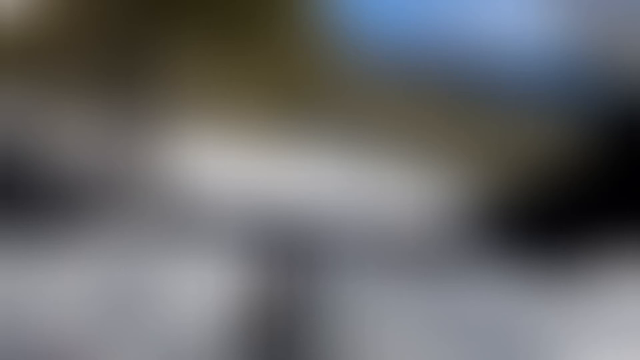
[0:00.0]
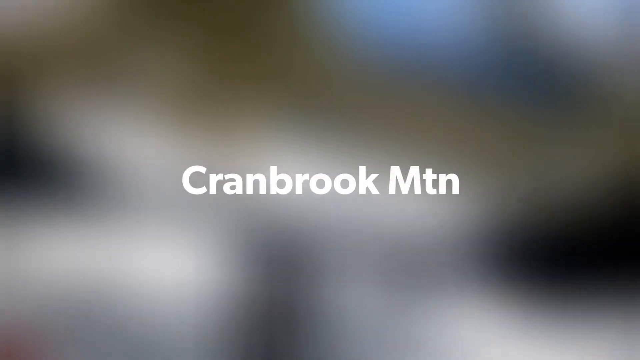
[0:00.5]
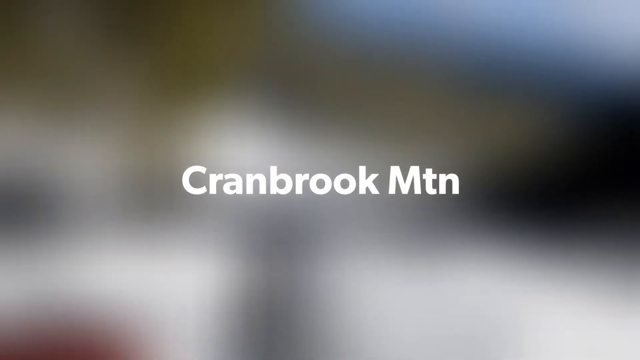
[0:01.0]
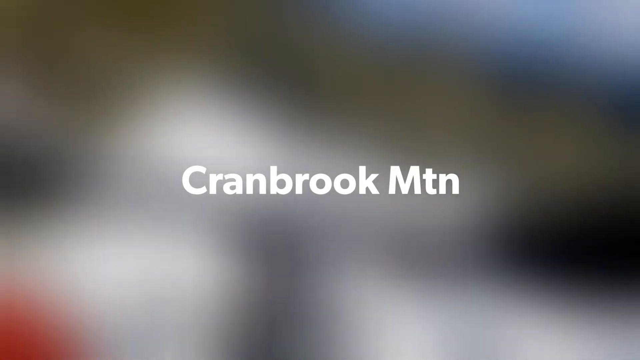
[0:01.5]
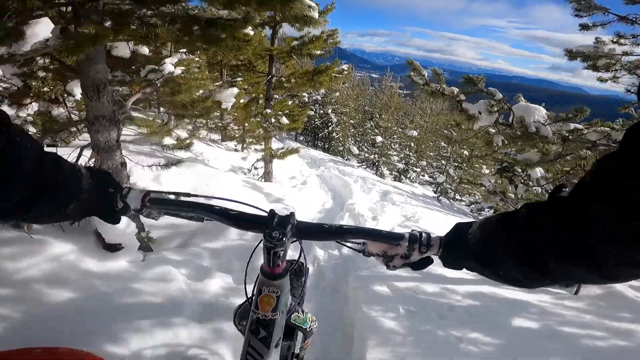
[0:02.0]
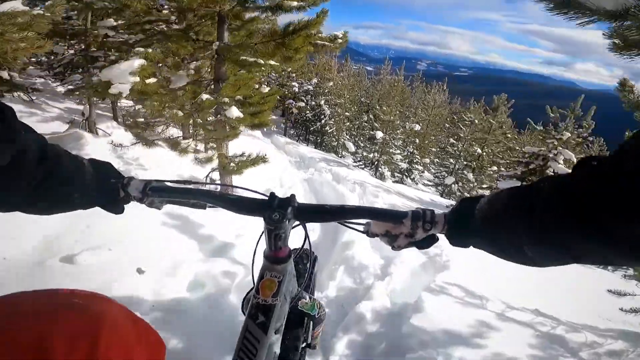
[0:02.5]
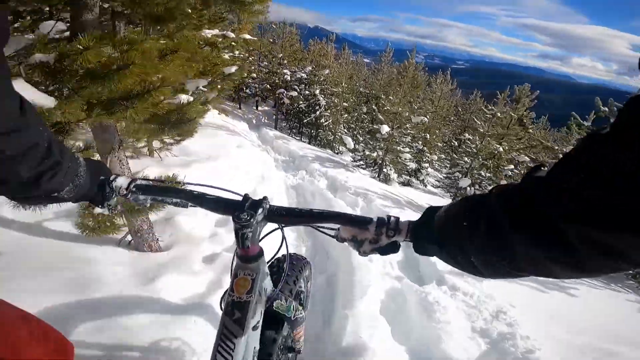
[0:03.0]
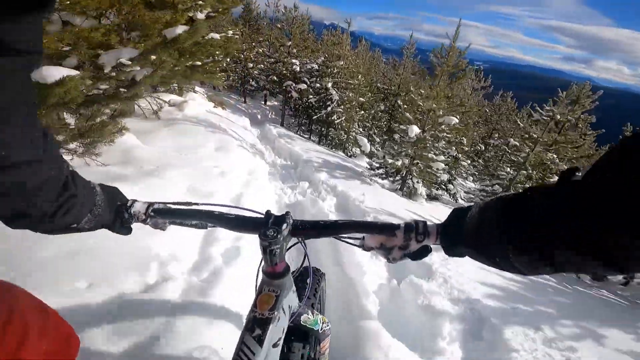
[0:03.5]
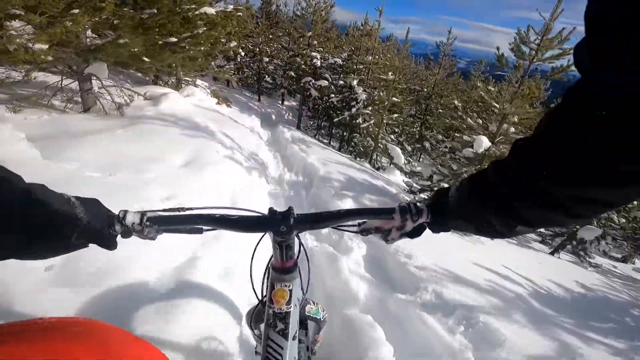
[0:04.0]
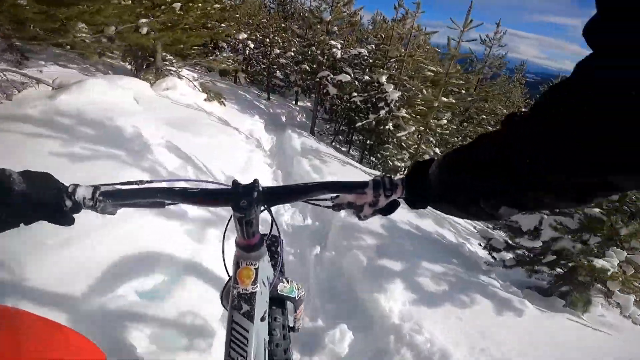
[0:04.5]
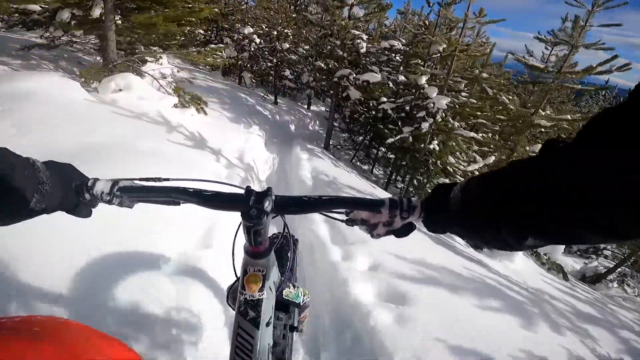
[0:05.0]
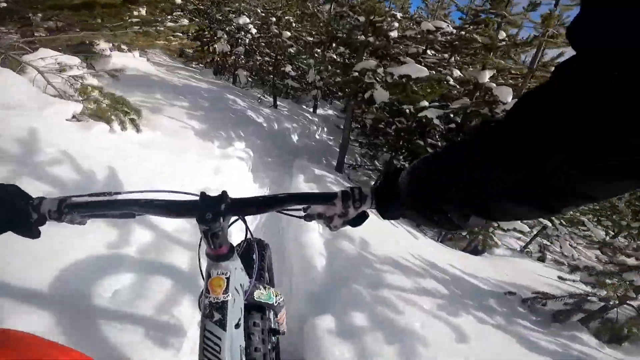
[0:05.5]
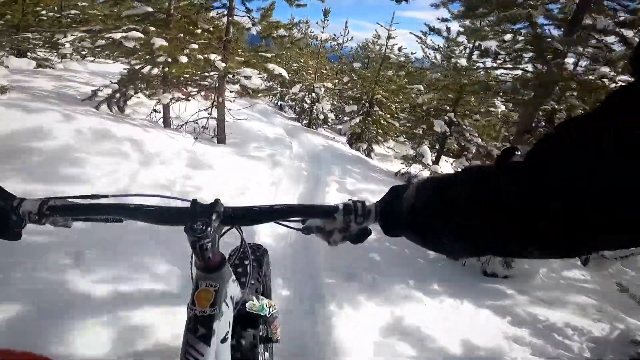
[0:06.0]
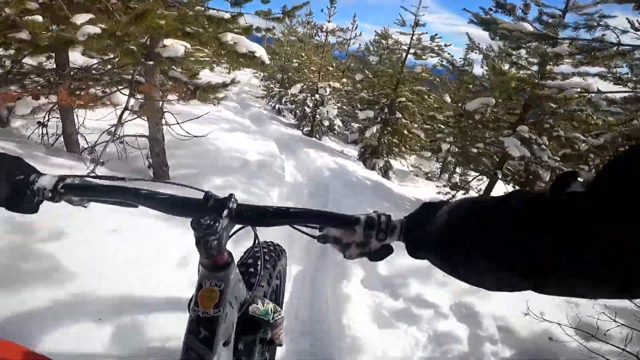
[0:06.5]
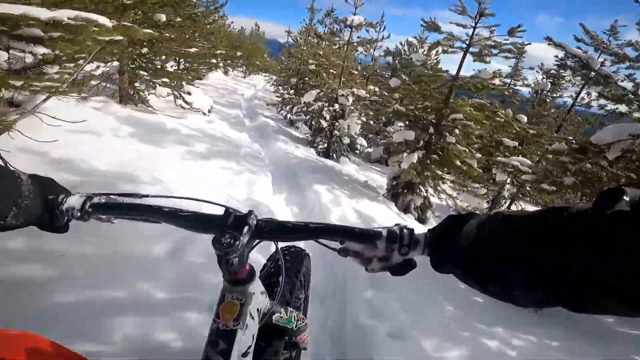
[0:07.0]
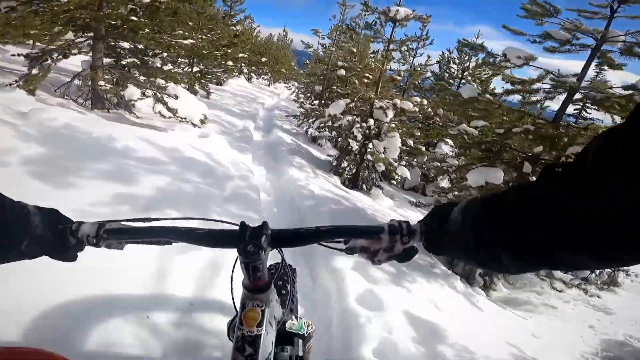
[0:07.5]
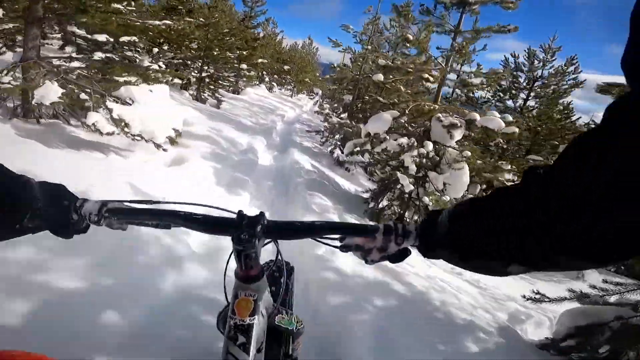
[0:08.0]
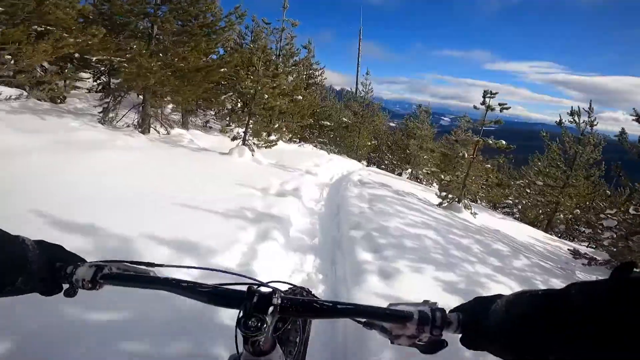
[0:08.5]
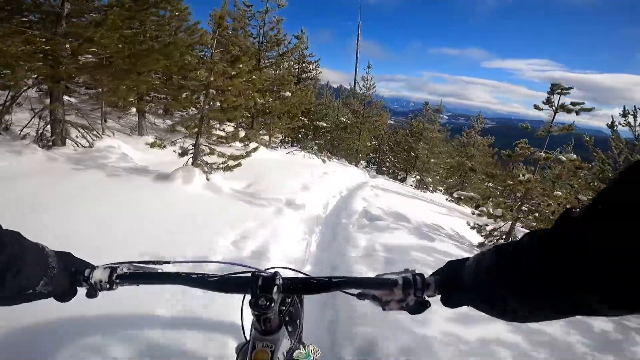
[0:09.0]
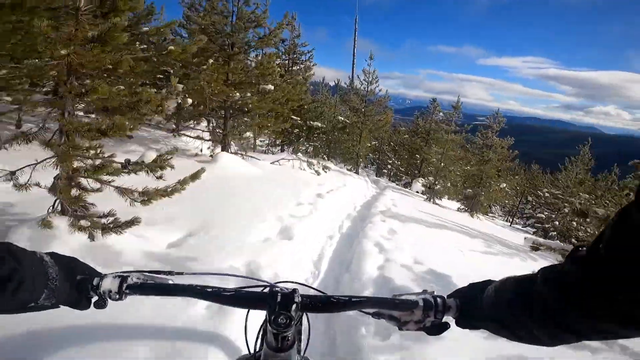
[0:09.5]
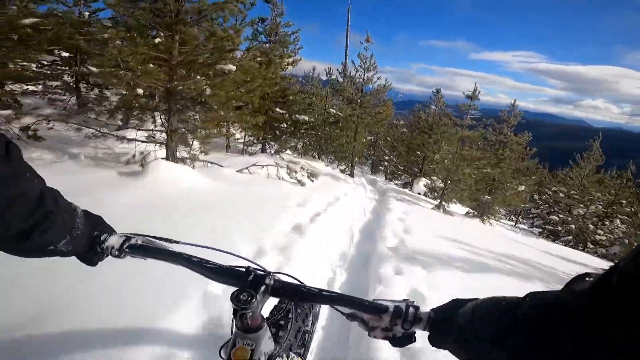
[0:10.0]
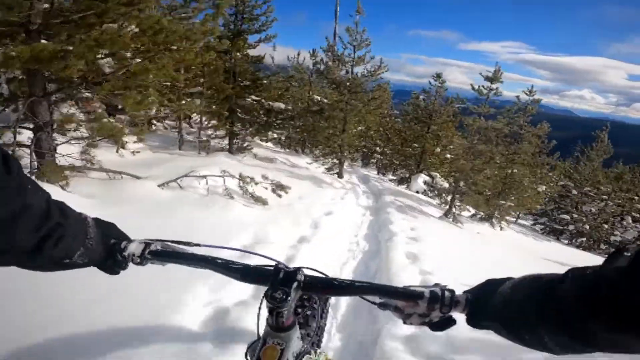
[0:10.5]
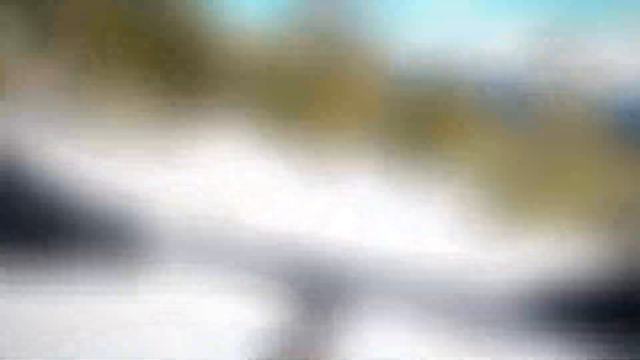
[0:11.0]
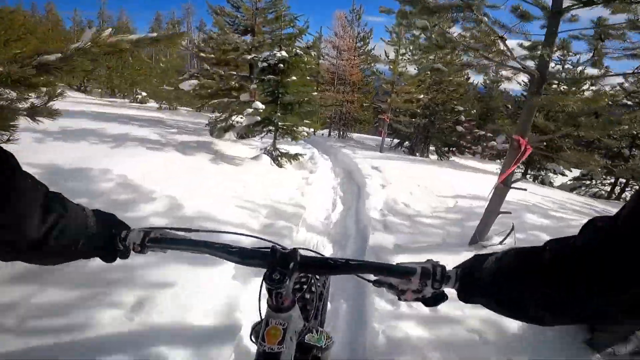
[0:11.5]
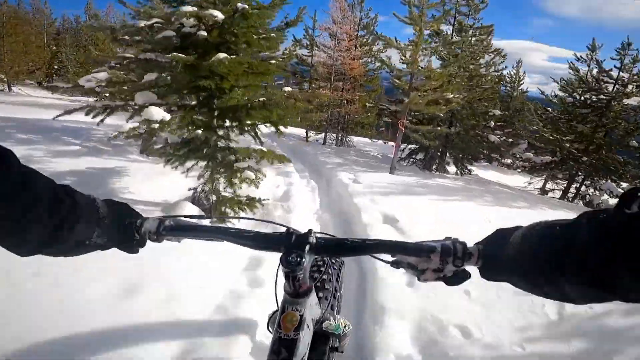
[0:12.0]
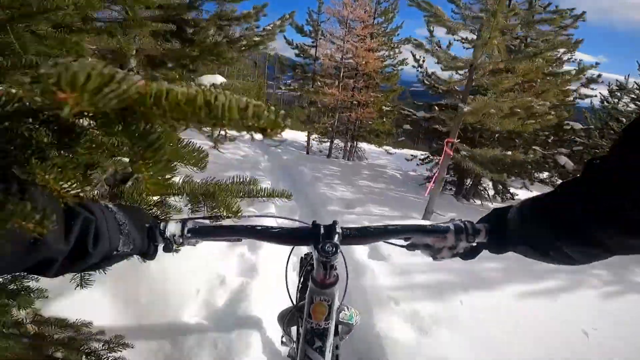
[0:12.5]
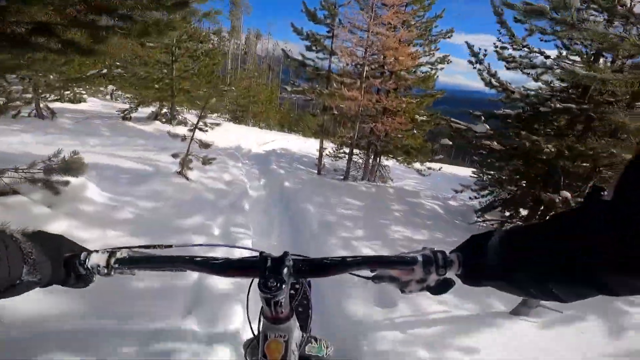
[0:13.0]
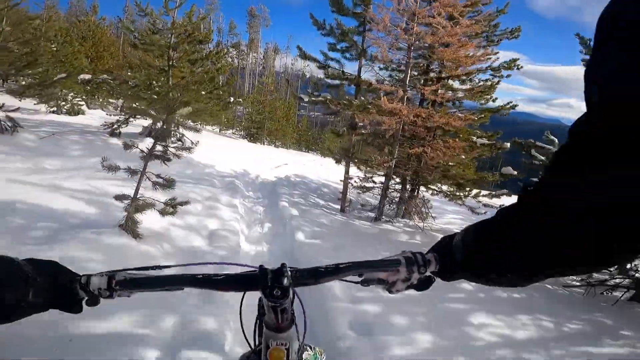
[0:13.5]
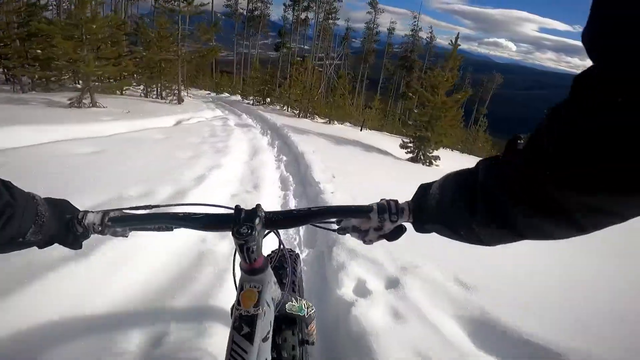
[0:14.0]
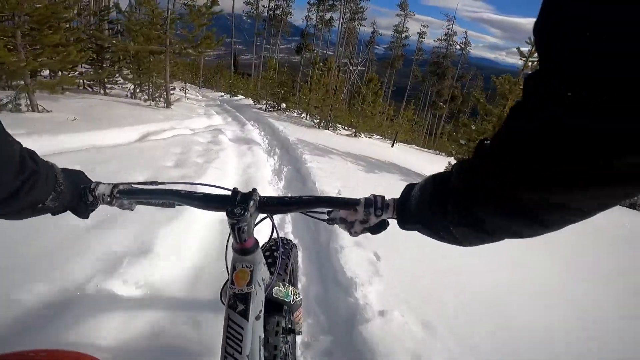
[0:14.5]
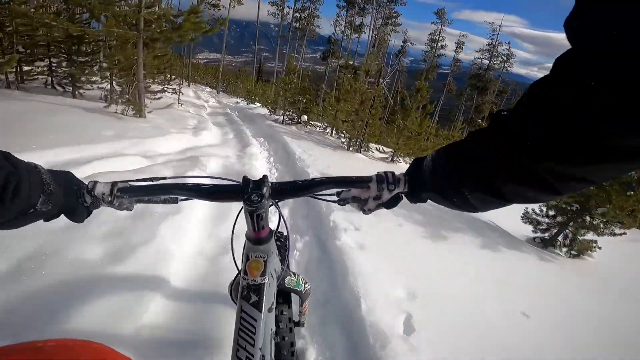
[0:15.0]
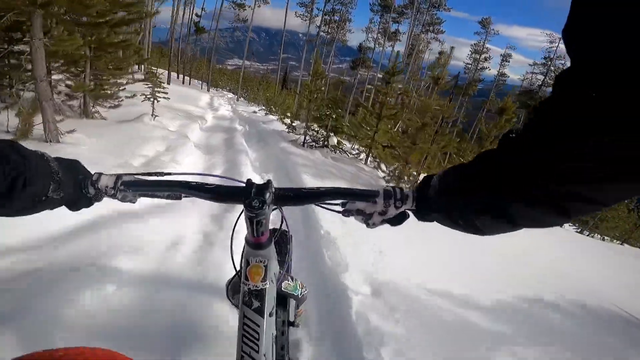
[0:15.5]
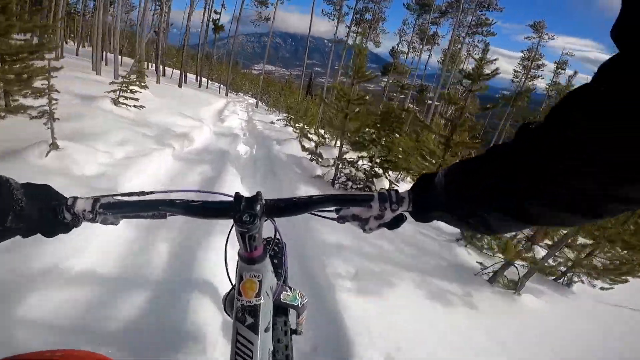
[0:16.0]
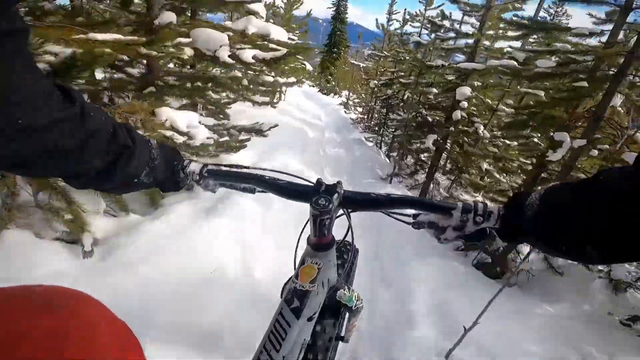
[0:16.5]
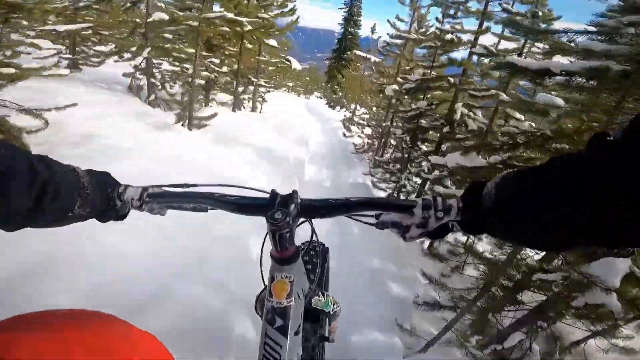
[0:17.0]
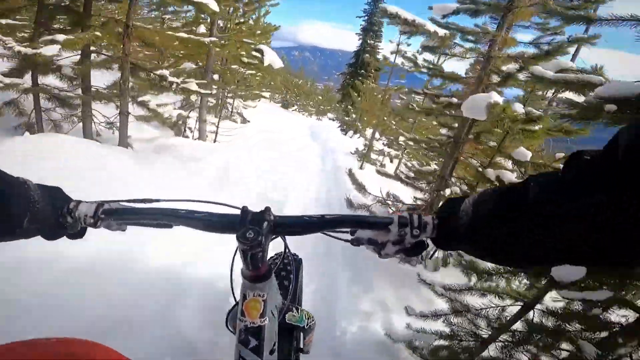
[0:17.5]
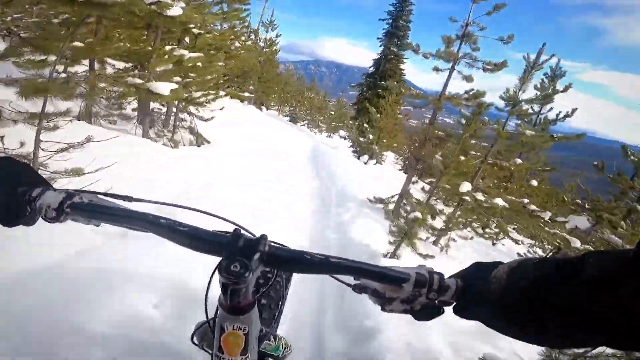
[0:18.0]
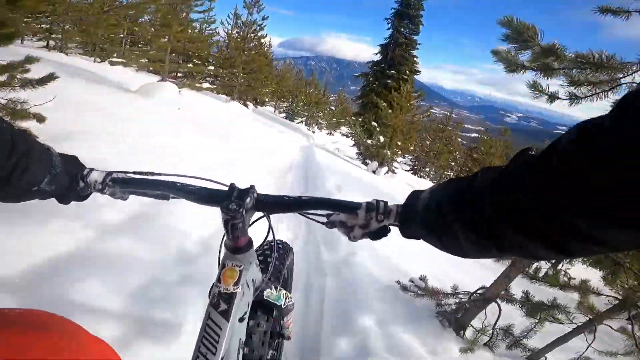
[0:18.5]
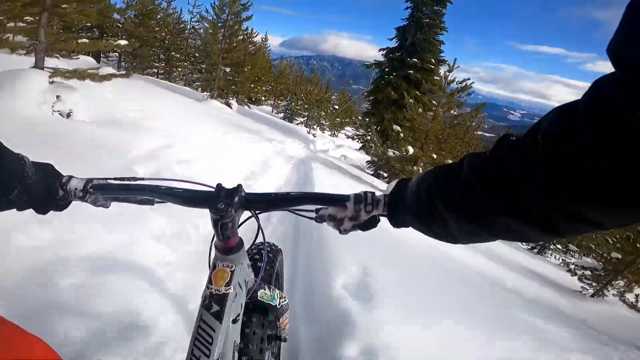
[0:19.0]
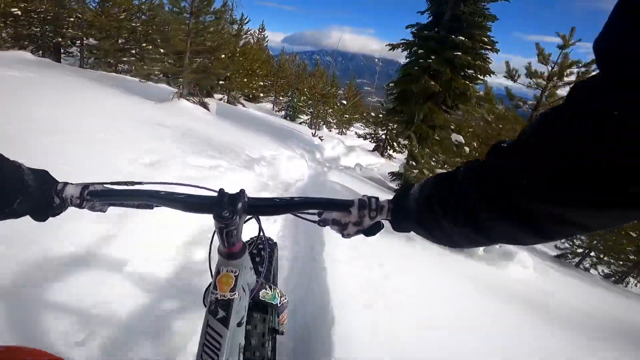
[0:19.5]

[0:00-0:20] The video opens on a blurred background with white text on the screen reading "Crayon Brook" followed by "MTN", an abbreviation of Mountain, in a basic font similar to, though apparently not, Arial. The text fades and the image comes into focus, showing what looks like a snowy mountain in the daytime. Evergreen trees are everywhere and mountains are visible in the back. The snow is deep, but it looks like a trail has been carved out to make room for the bike. The camera is apparently strapped to the biker's chest, and his gloved hands are visible on the handlebars. He wears a long-sleeved top, probably a black jacket, and the bike is gray, white and black. He starts going downhill, somewhat slowly, then gains some speed. The evergreens are very tall, so their tops cannot be seen, and their needles start growing near the top.